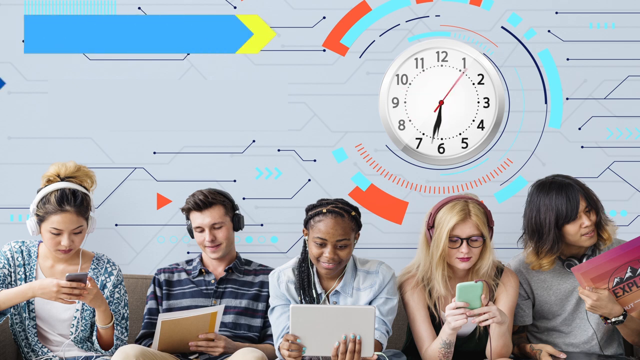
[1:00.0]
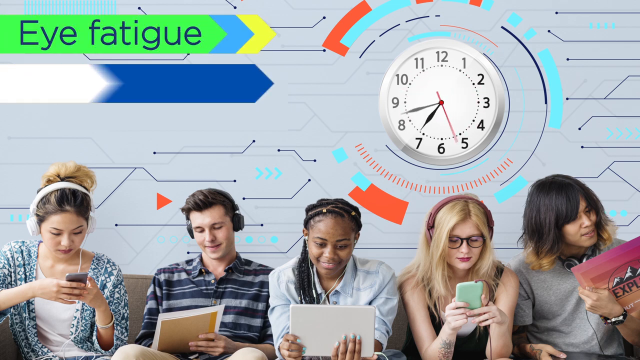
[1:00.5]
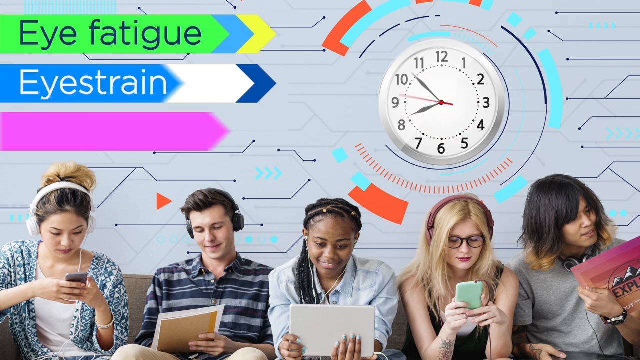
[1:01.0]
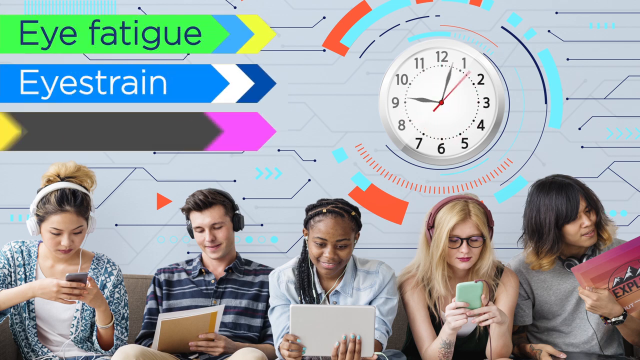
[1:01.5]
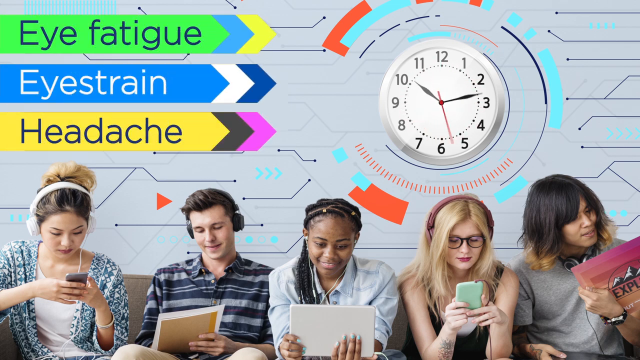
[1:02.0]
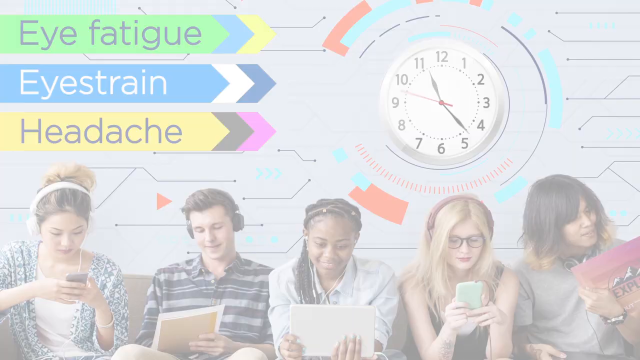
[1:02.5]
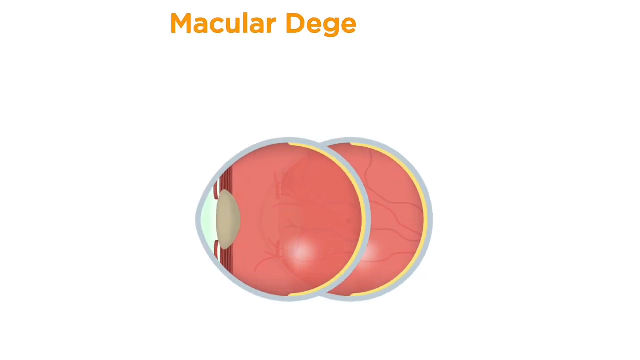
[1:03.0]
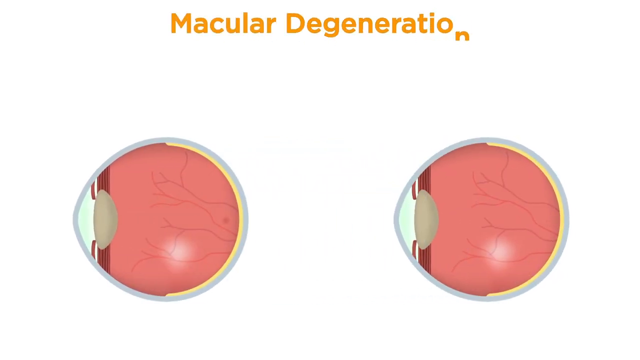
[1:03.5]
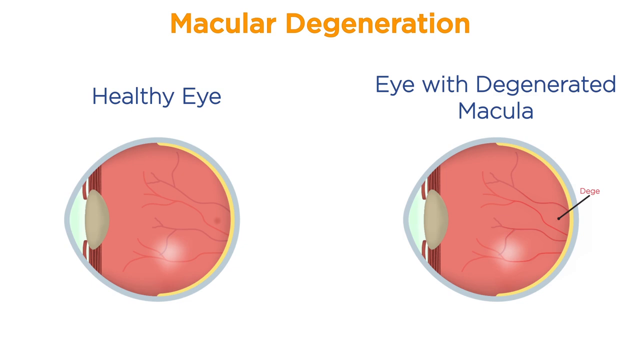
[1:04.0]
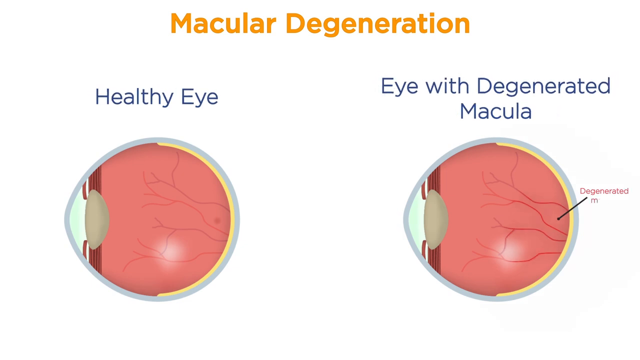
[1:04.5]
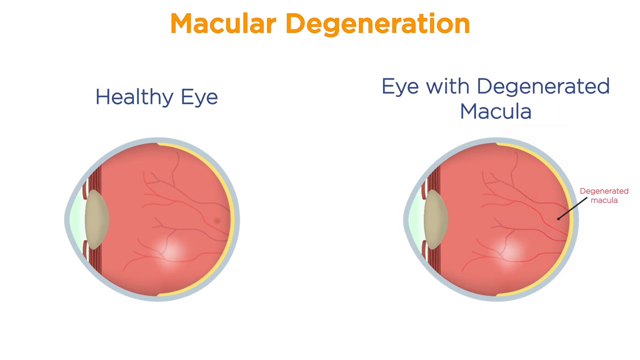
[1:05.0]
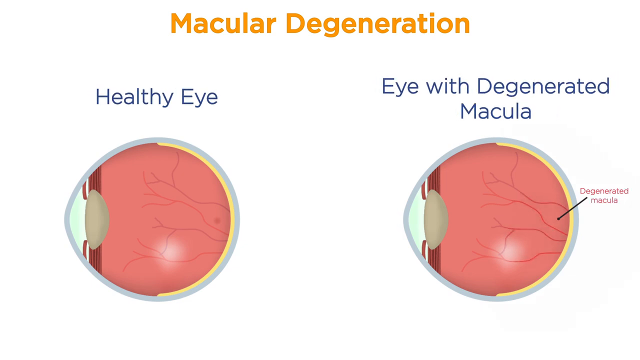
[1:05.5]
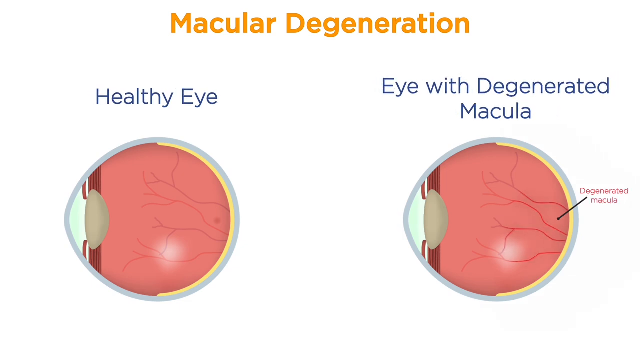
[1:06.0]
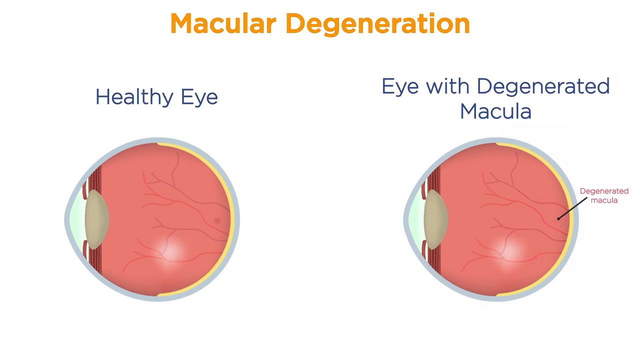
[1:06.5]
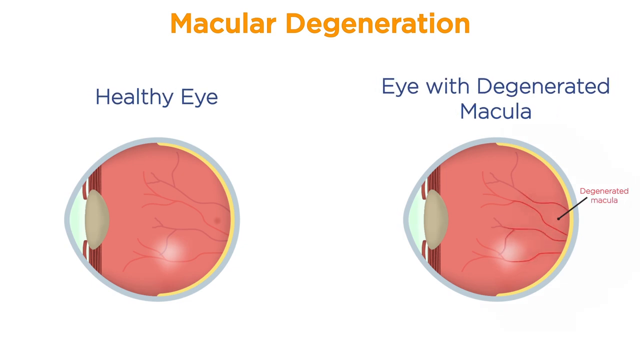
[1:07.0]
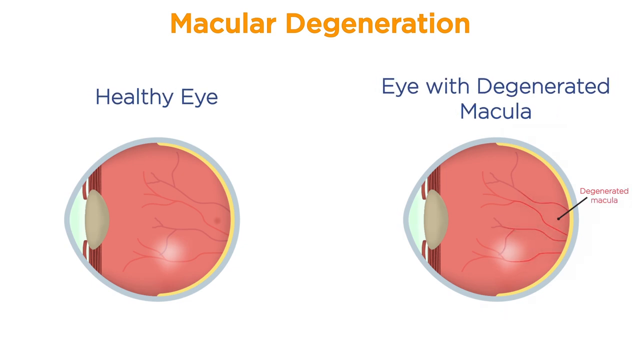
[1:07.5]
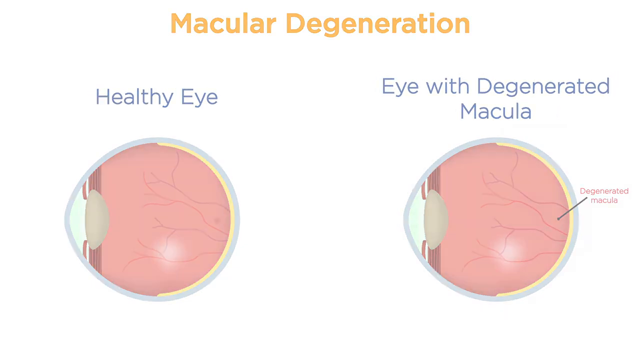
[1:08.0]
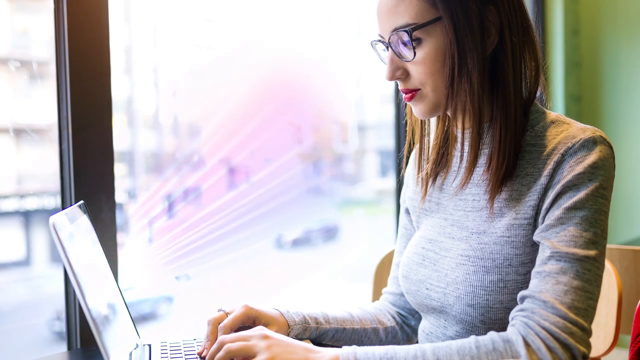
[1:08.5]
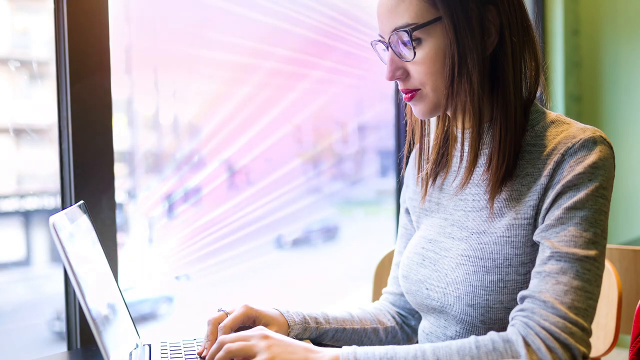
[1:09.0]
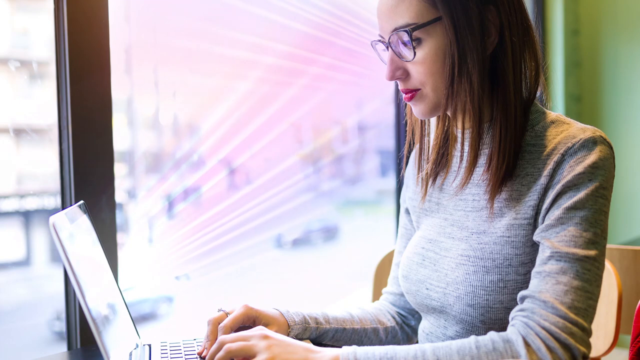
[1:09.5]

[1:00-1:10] Five people are shown side by side, viewed from head to chest, seated on a couch. They look quite young: one man and four women. One woman is dark-haired, and one is blonde-haired with glasses. The one in the middle is a black girl with braids. Next to her is a white man in a horizontal striped shirt, and next to him, at the extreme left, is an Asian girl with bleached blonde hair pulled in a ponytail on top of her head. All five are staring at different types of digital devices. Behind them is a grey background with a clock spinning very fast. Arrows then pop up from the upper left: a green arrow reads "eye fatigue", a blue one "eye strain", and a yellow one "headache". The screen changes to an animation of macular degeneration featuring two eyeballs: the one on the left is labelled "healthy eye" and the one on the right "eye with degenerated macula".